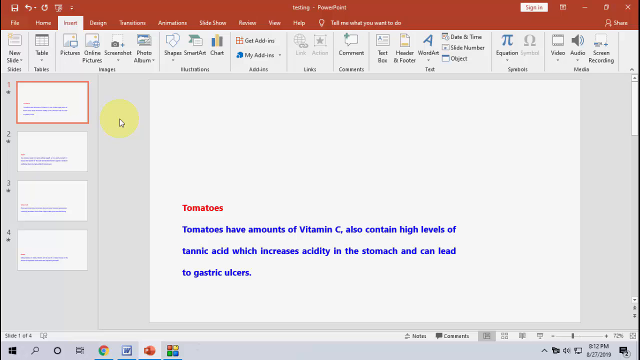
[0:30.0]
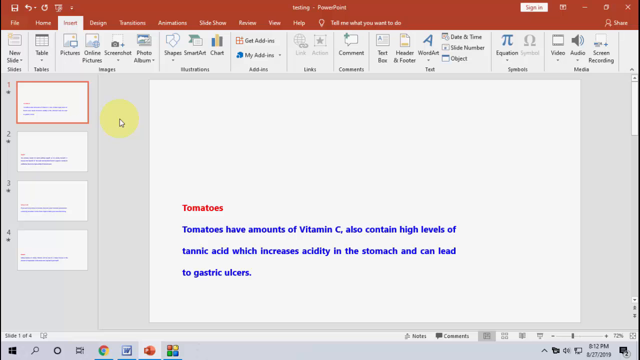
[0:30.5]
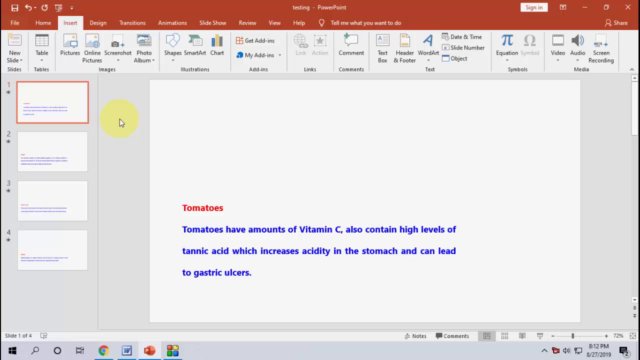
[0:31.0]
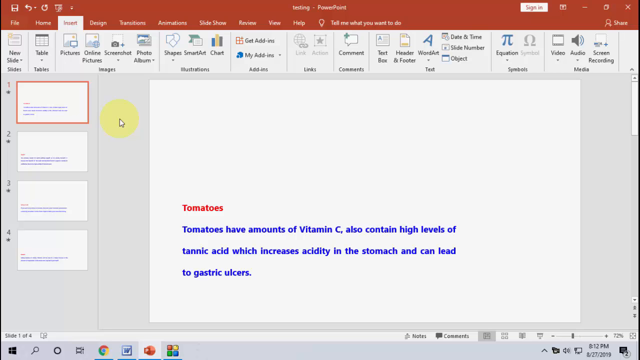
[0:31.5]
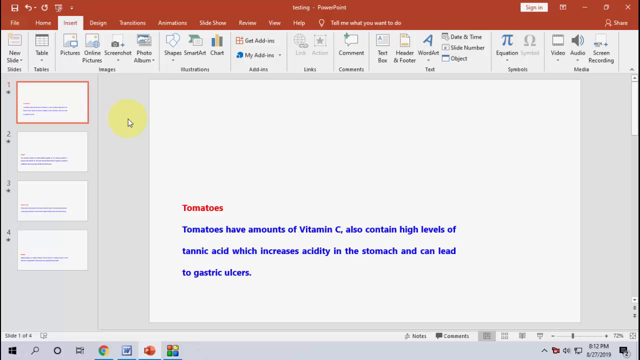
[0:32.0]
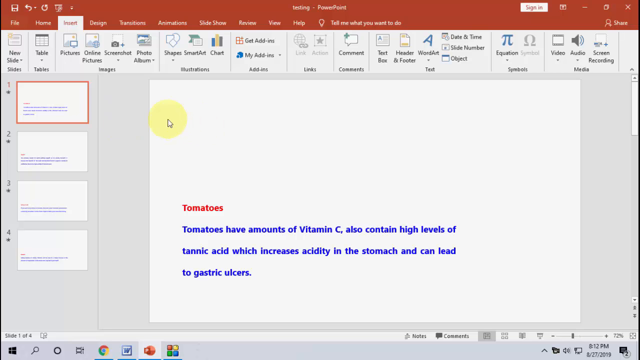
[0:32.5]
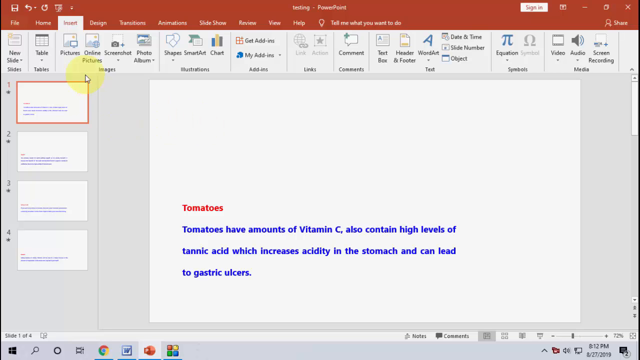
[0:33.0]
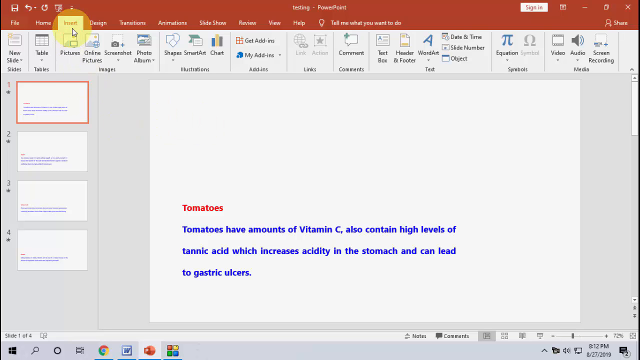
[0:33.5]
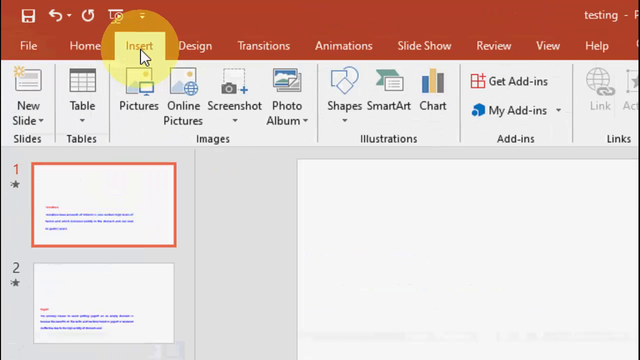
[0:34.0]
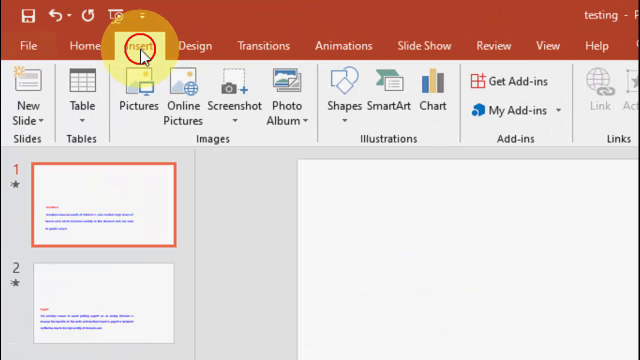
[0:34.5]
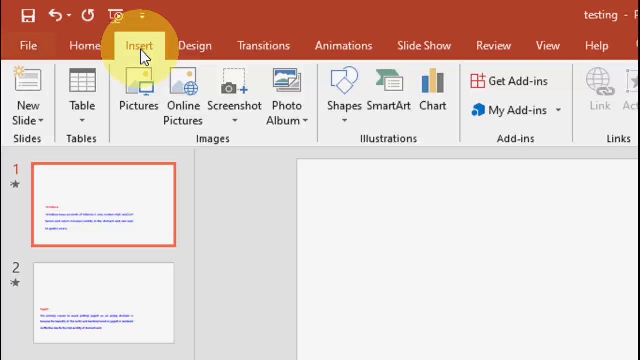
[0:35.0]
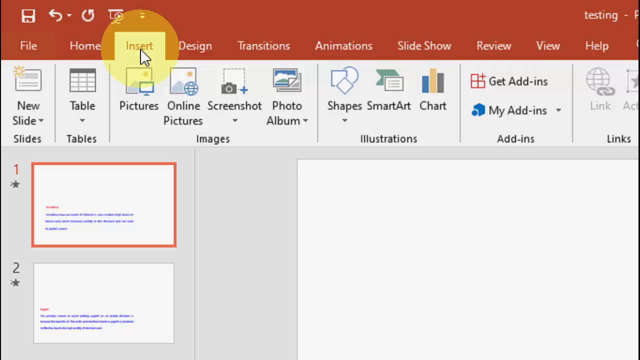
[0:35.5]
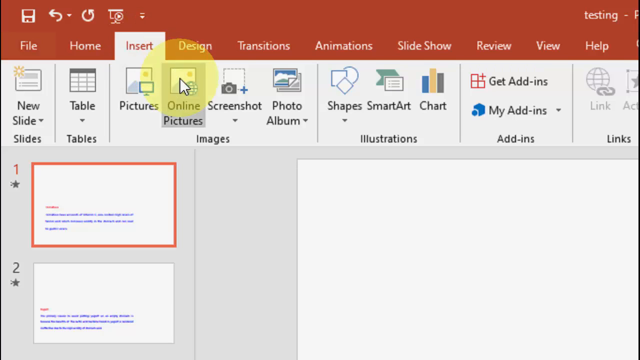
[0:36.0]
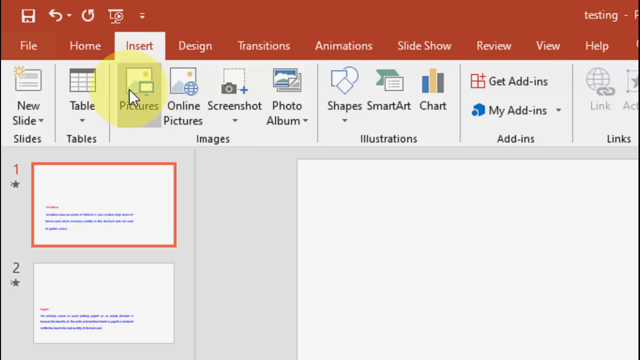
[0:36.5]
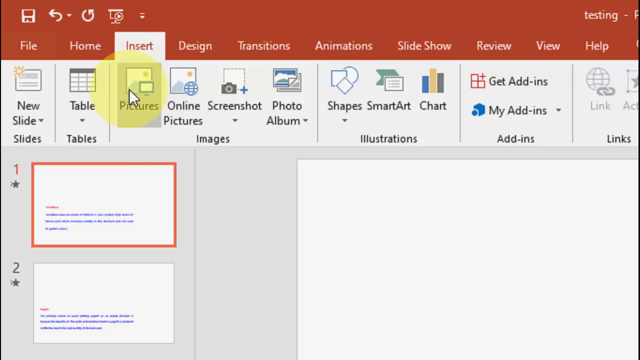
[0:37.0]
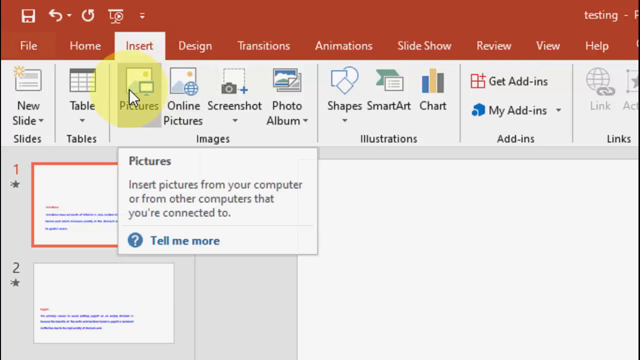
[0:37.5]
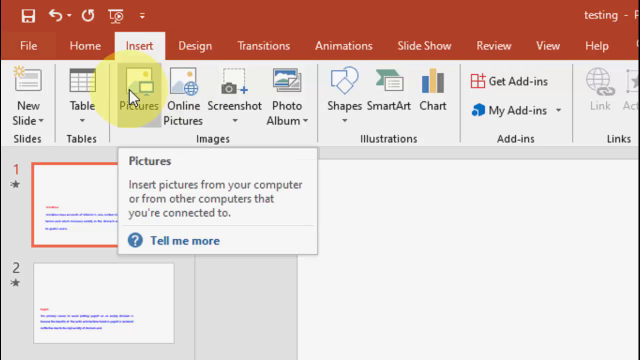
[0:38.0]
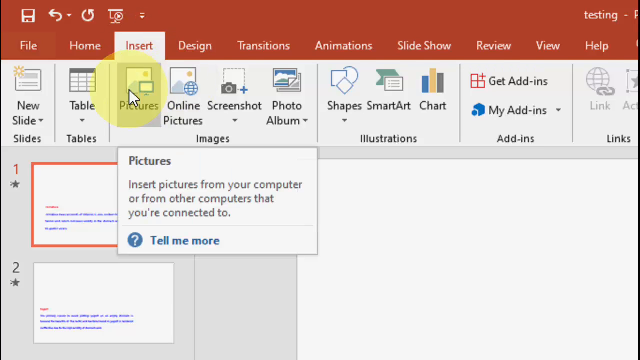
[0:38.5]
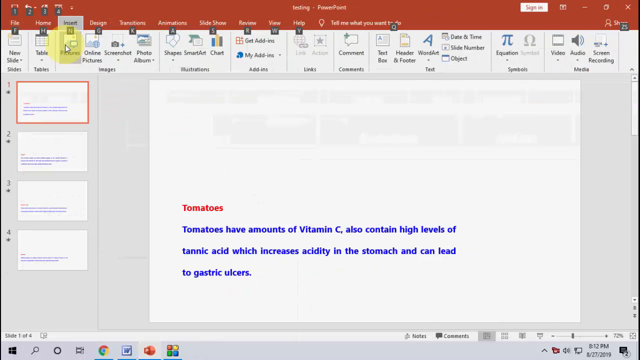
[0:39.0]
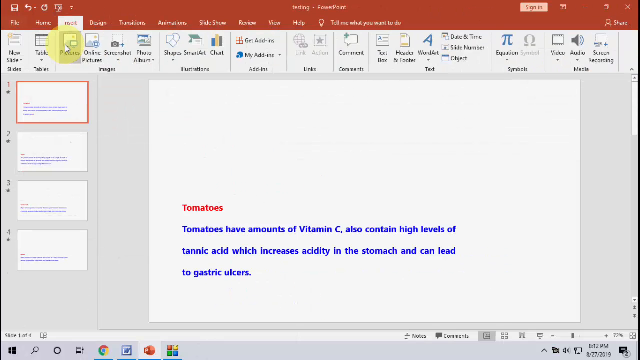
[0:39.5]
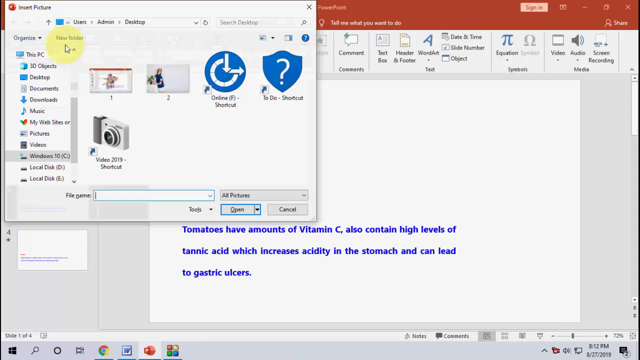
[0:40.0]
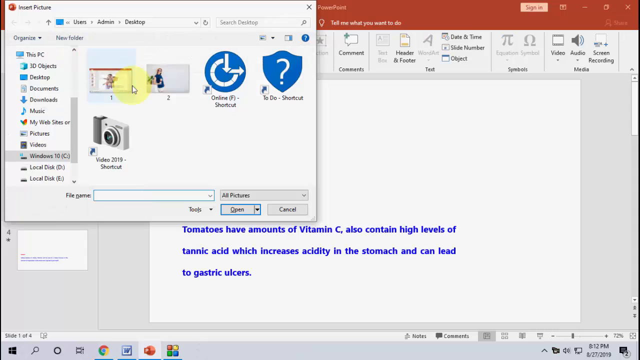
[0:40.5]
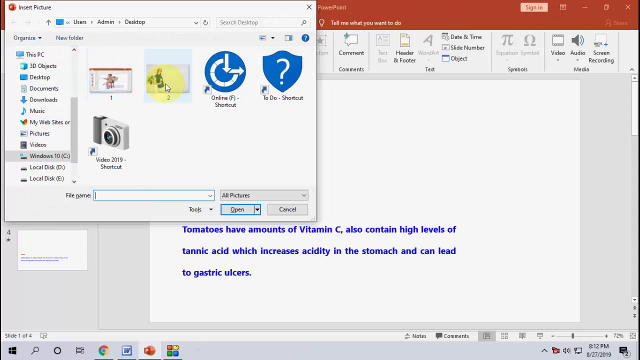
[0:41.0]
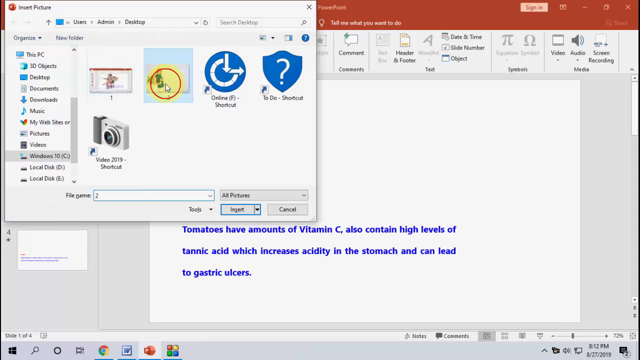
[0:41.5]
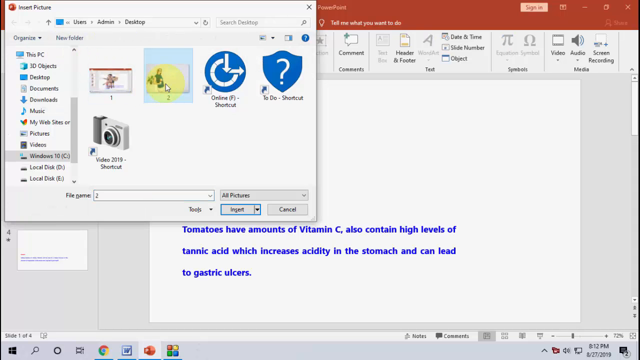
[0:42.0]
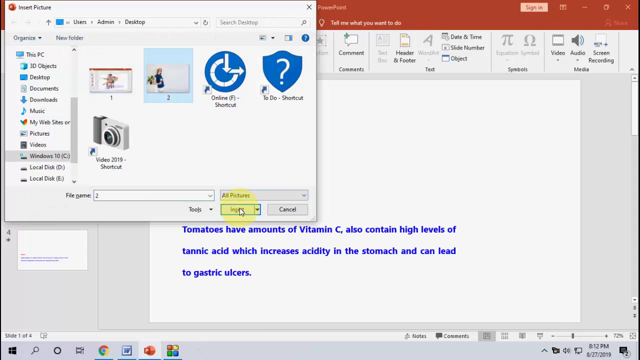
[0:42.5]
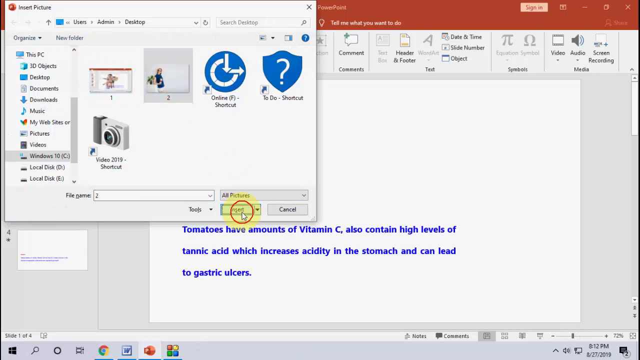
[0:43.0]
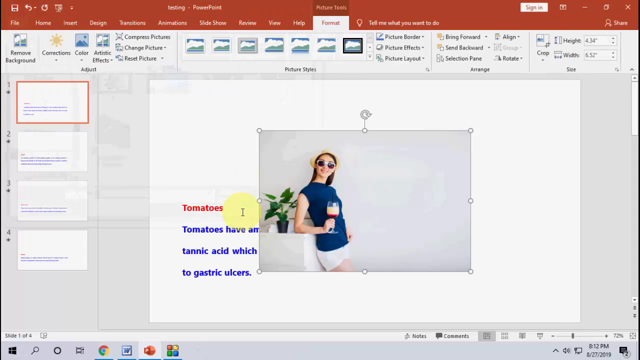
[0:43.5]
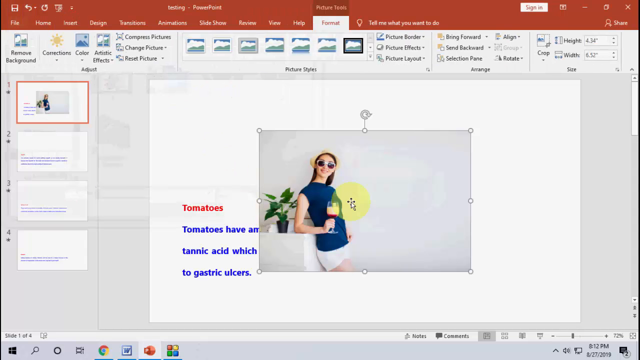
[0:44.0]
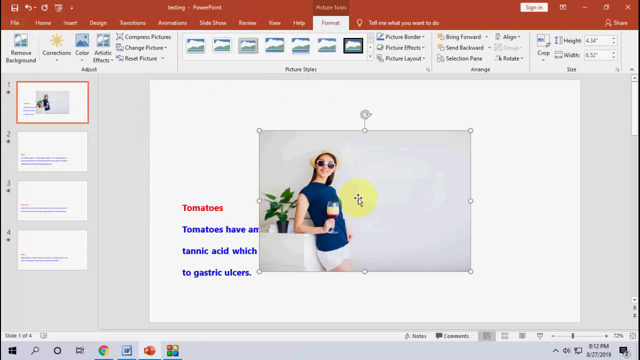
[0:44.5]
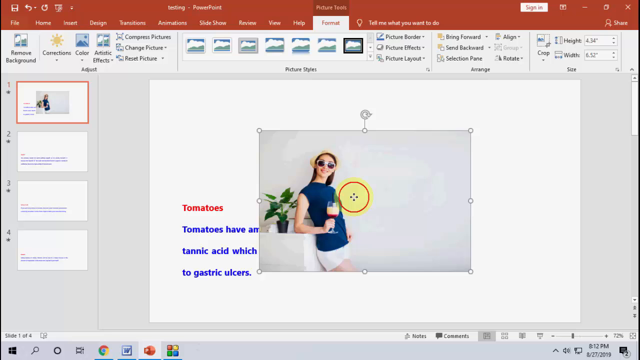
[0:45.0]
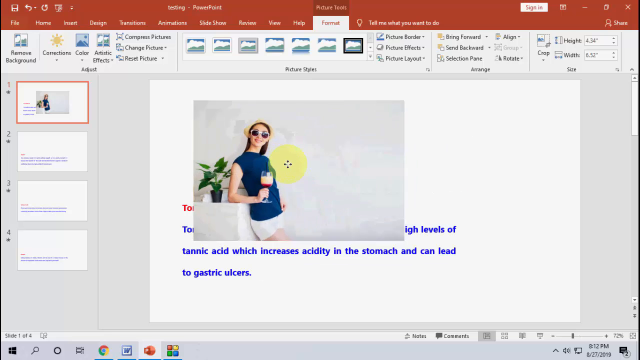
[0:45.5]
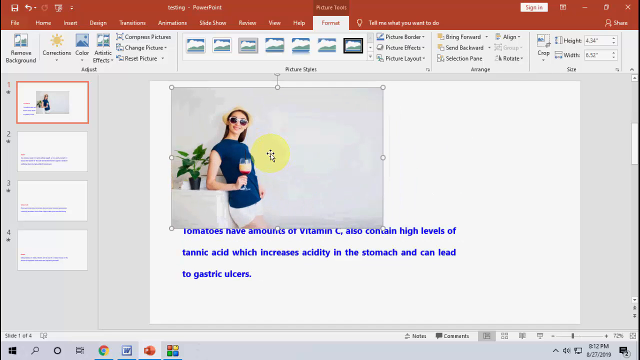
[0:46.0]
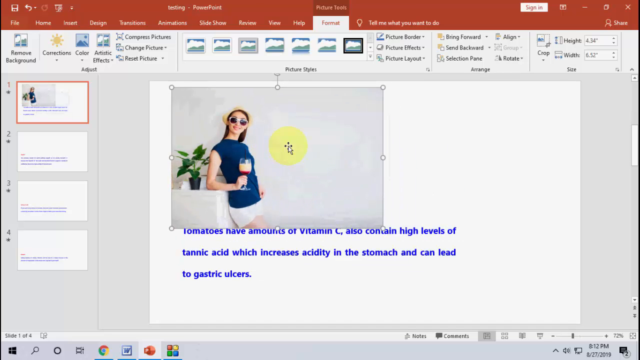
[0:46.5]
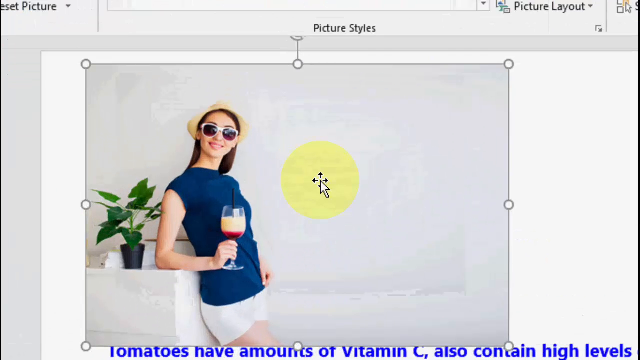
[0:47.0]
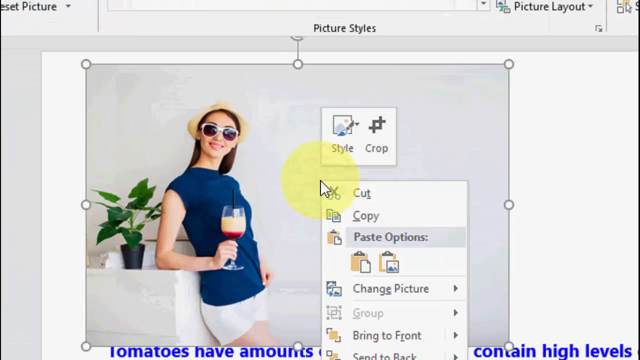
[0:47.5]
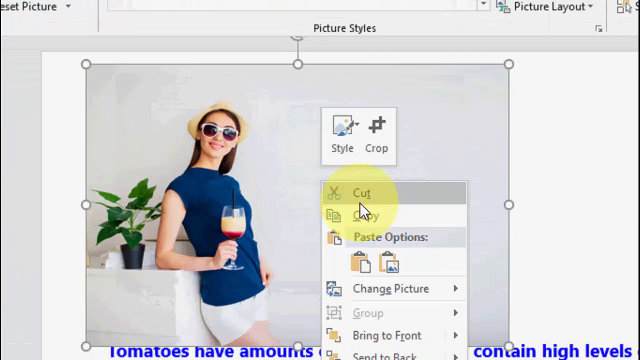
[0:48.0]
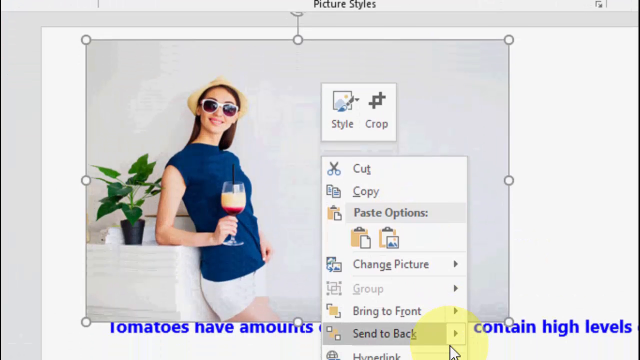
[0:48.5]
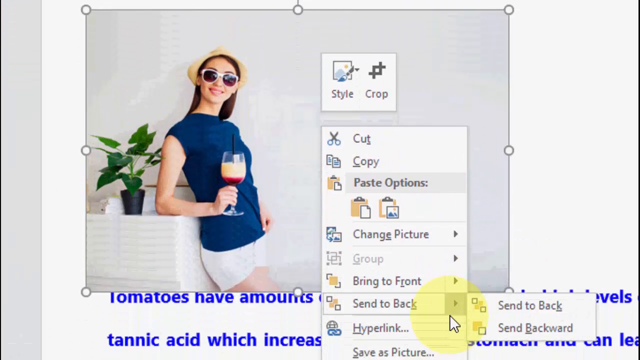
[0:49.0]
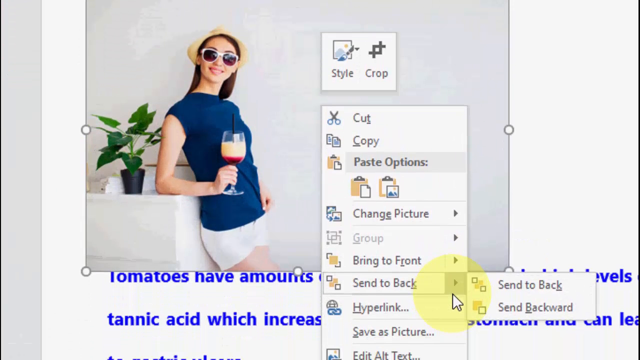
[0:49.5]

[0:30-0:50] A PowerPoint slide is being edited, with the editing toolbar at the top and the word "PowerPoint" visible at the top of the screen. The slide has information about tomatoes, just text against a white background with no images. The cursor on the left side moves around, hits insert at the top, then hits pictures and hovers over it, and a tooltip appears. A window opens with pictures from the hard drive; the cursor hovers over an image, clicks it and hits insert. A picture of a woman appears: she holds a wine glass, smiles and looks at the camera, and wears a blue shirt, white shorts, sunglasses and a tan hat, with long brown hair. A potted plant is on the white table behind her, and the background is also white. The cursor moves the picture around, the view zooms in, and send to back is selected to change the photo's position. The photo is large and covers some of the text on the slide, and there are little dots around it for adjusting its size.